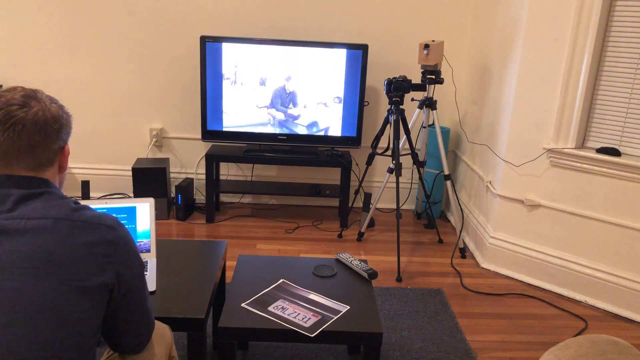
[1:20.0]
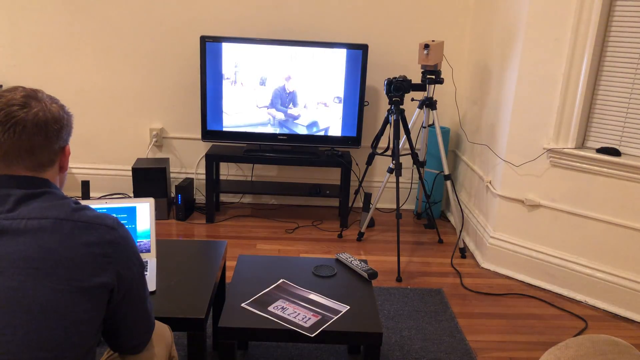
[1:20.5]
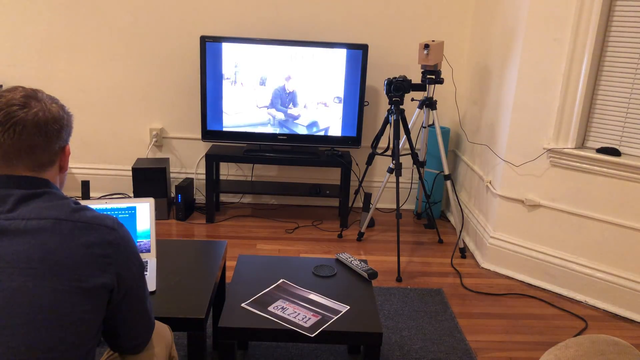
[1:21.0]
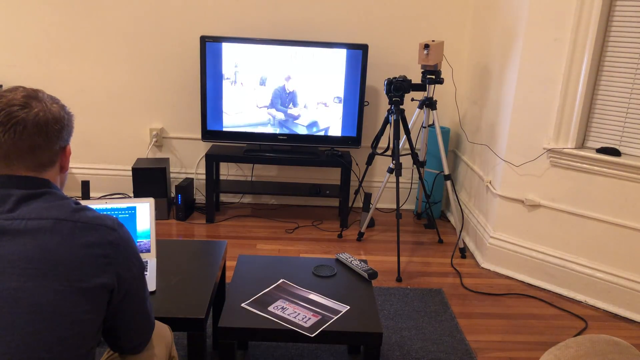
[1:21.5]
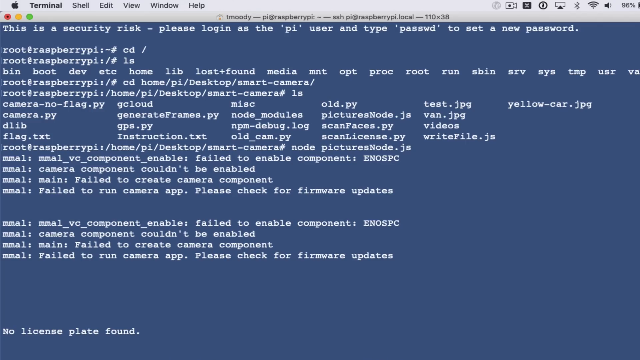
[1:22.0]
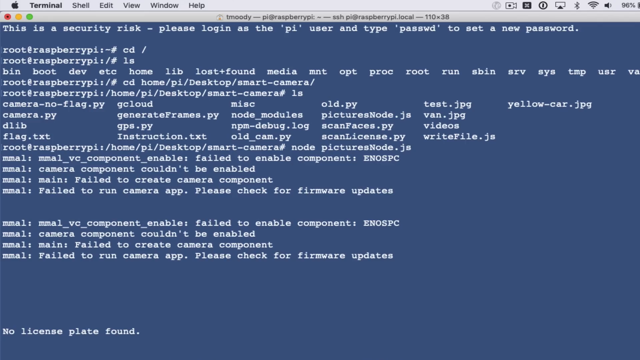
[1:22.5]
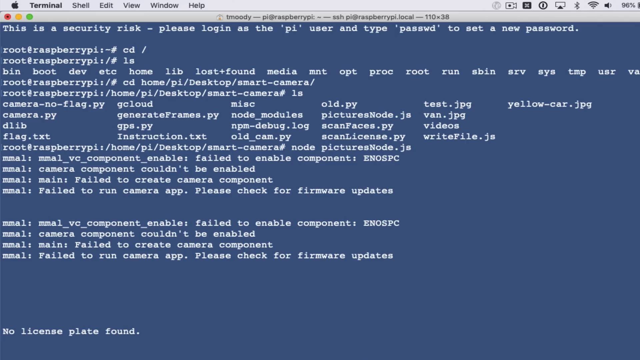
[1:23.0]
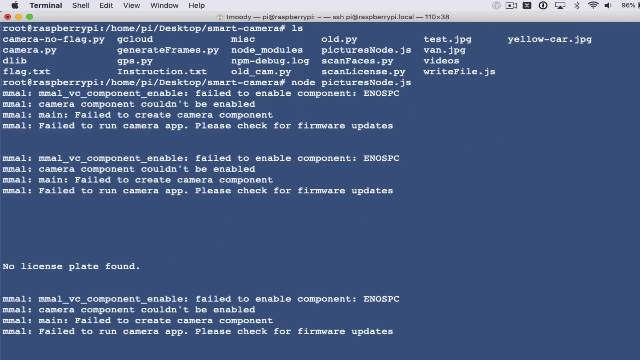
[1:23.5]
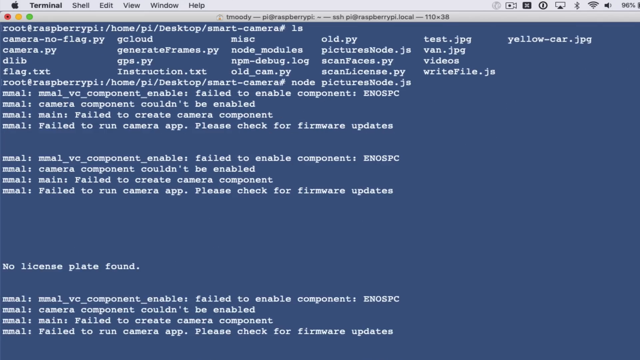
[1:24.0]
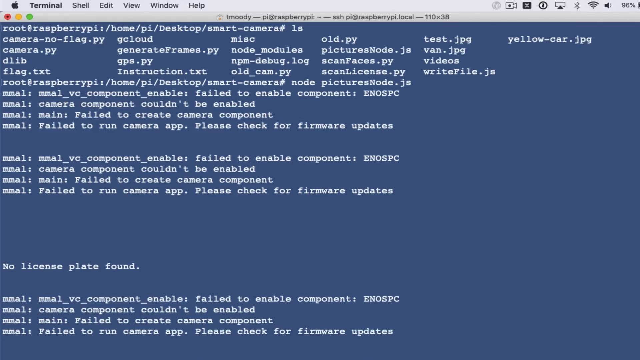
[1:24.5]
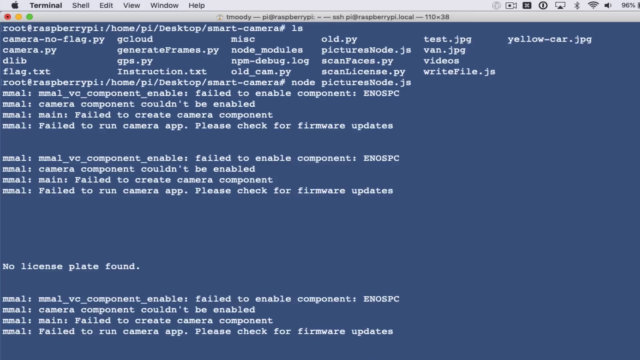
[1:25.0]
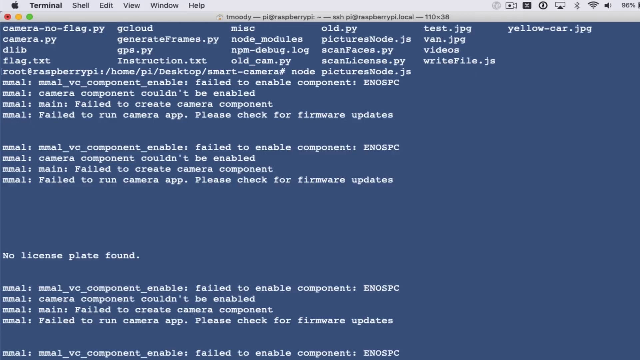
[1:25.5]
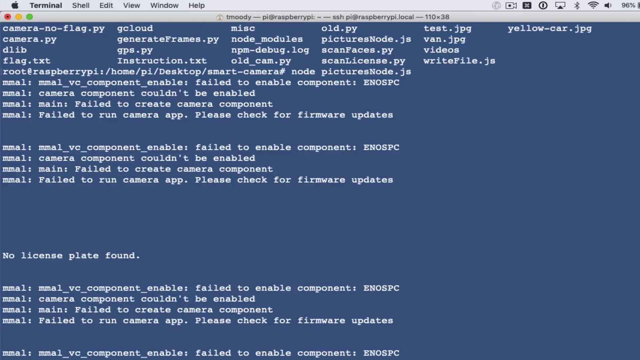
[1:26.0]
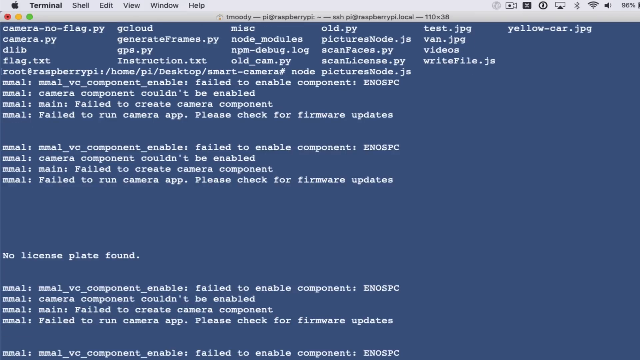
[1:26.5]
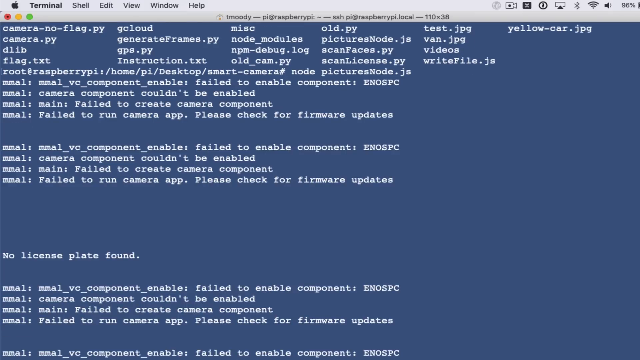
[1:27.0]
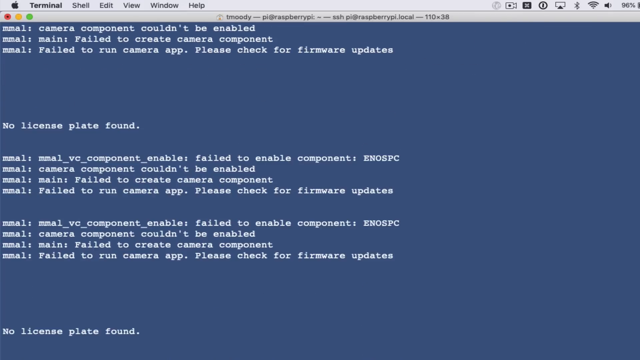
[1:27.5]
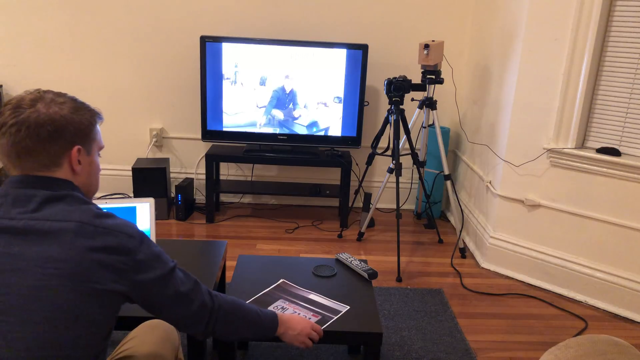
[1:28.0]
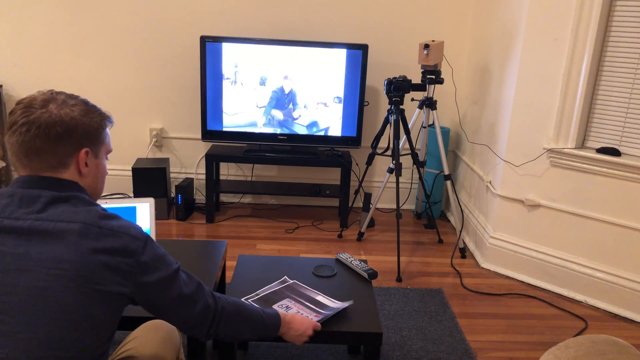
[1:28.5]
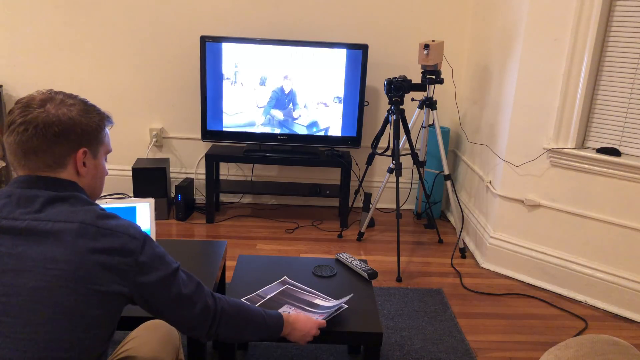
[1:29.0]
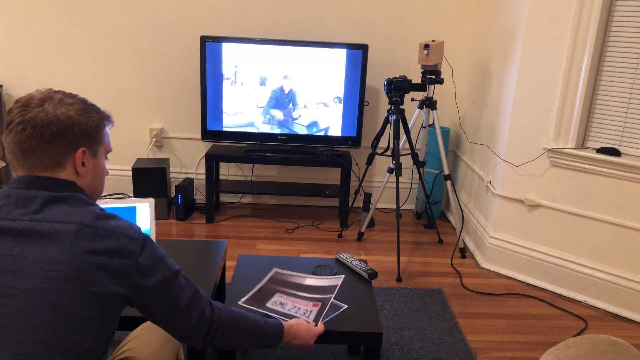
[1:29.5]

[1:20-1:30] The man points the picture at the camera, and it shows nothing. The video returns to the screen share, where the screen says that no license plate was detected. He seems to be showing the code he has written for the Raspberry Pi. The text says that it failed to enable the component, that the camera component cannot be enabled, that it failed to create the camera component, and to check the firmware update. After that it says "no license plate found", even though he showed the camera a license plate with numbers on it.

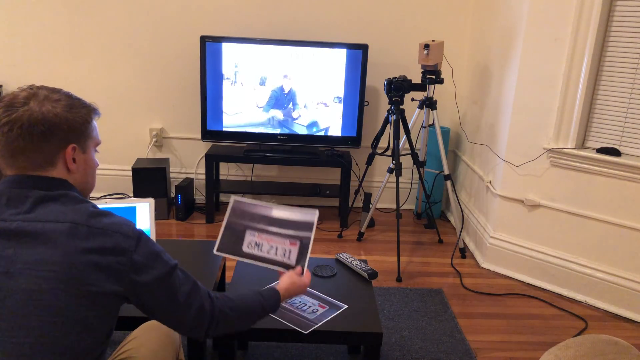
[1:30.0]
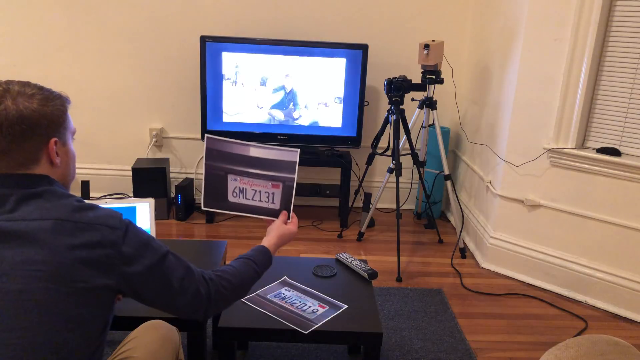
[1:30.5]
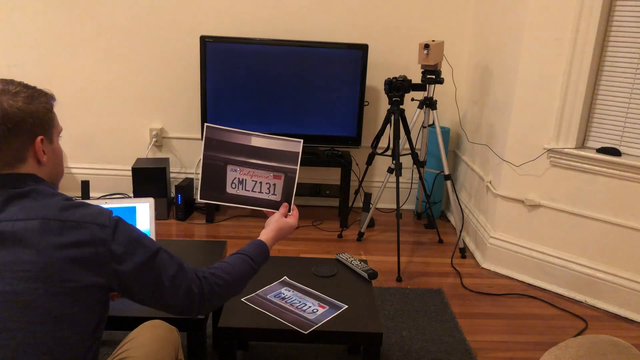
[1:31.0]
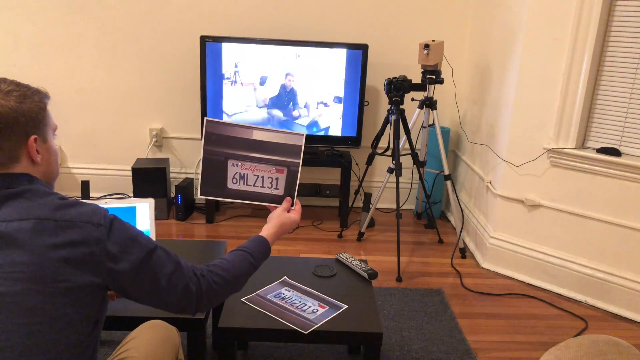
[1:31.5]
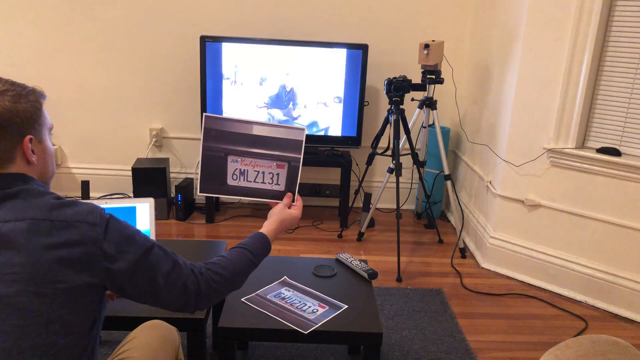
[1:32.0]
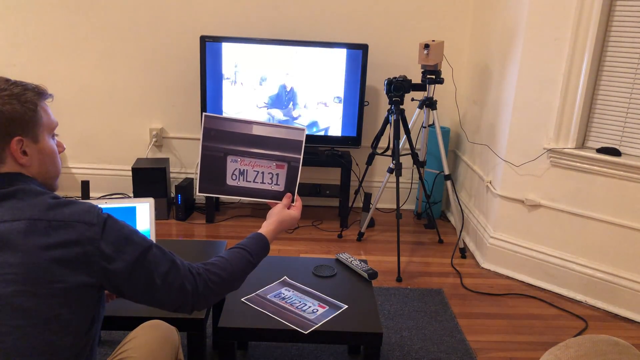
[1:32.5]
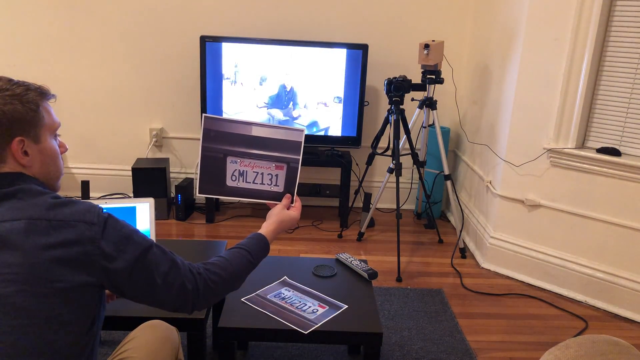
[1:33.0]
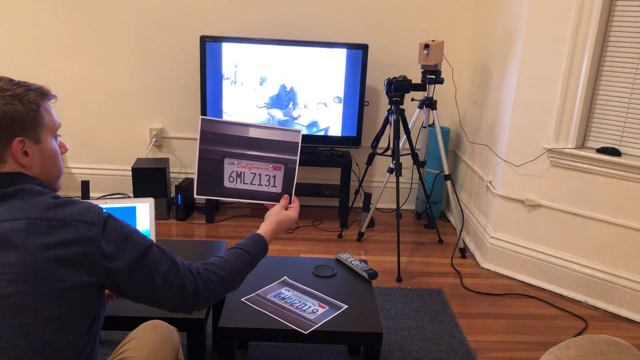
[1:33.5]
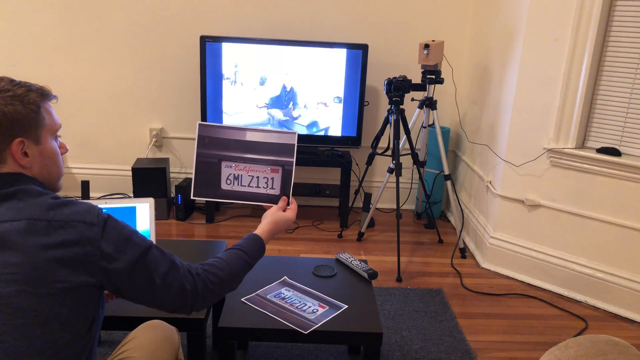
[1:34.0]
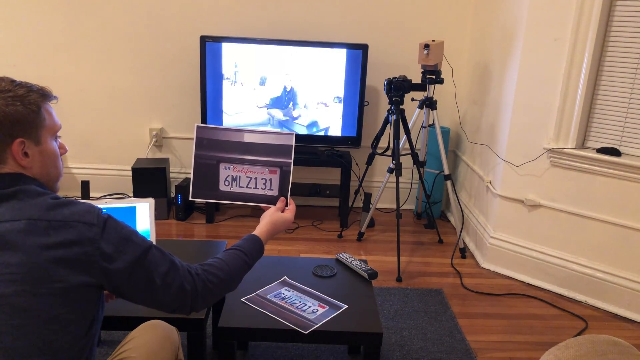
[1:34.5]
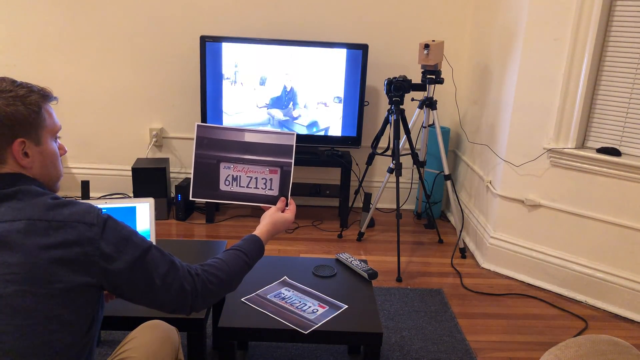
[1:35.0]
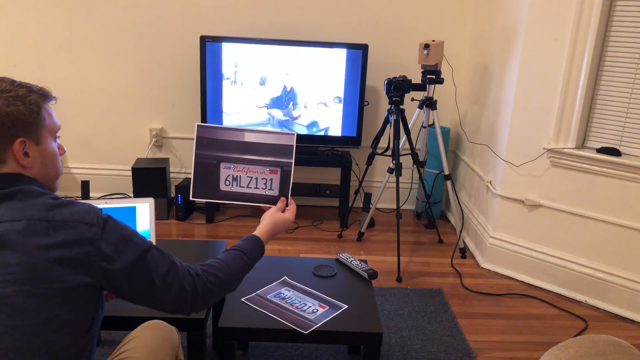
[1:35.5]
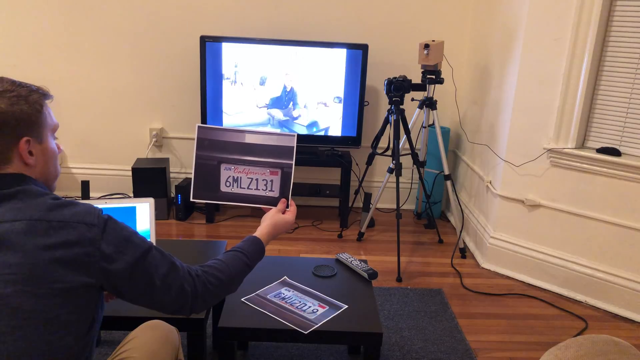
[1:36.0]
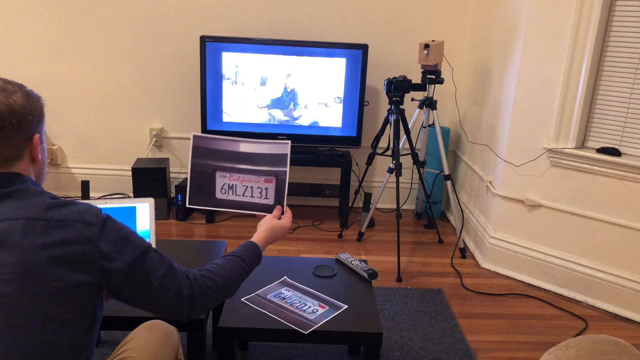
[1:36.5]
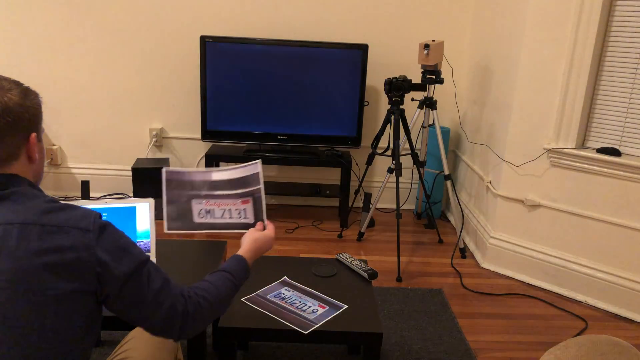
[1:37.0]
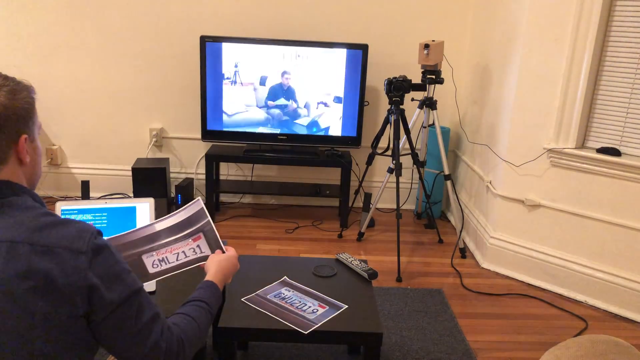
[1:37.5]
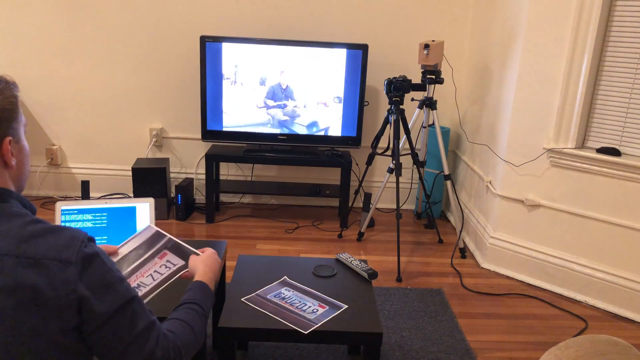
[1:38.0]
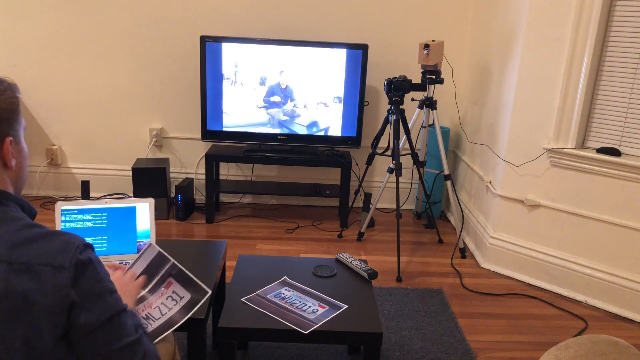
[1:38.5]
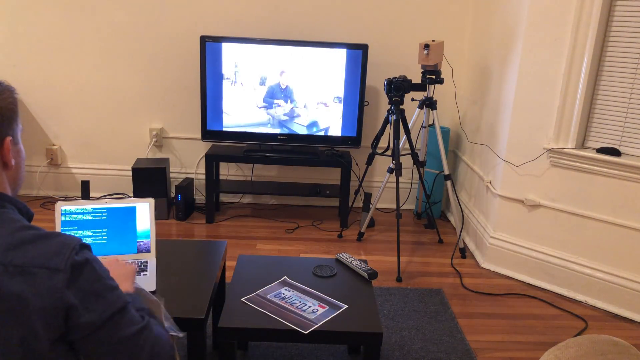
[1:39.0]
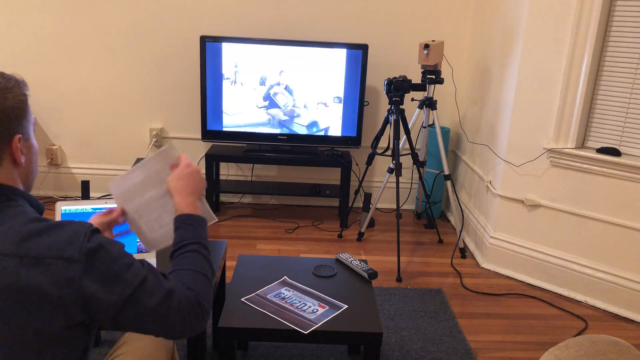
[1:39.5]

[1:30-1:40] The man is seen on his own camera. He picks up a picture of a license plate printed on an 8x11 white piece of paper off his coffee table. He shows the camera behind him the numbers on it, "6MLZ131", then lifts it up and faces it toward the camera at the side of the room. He remains visible on the TV screen with his laptop in front of him, via the tripod camera set up in the corner of the room.